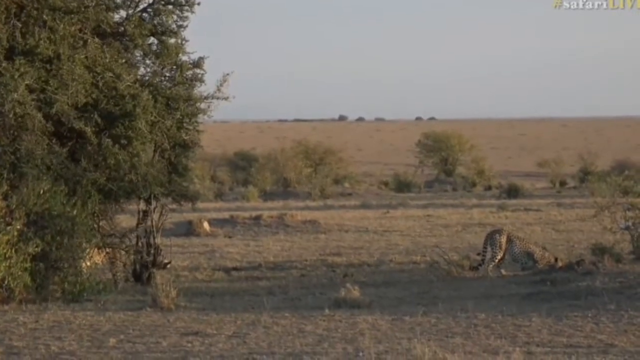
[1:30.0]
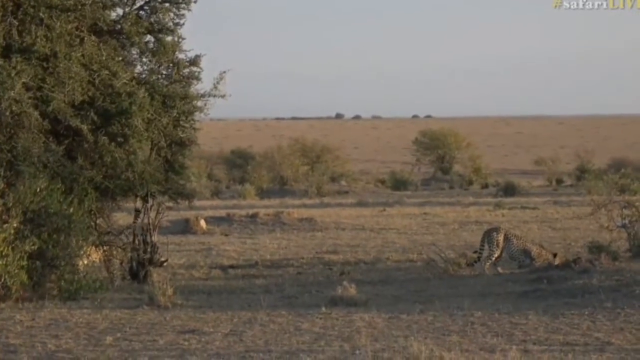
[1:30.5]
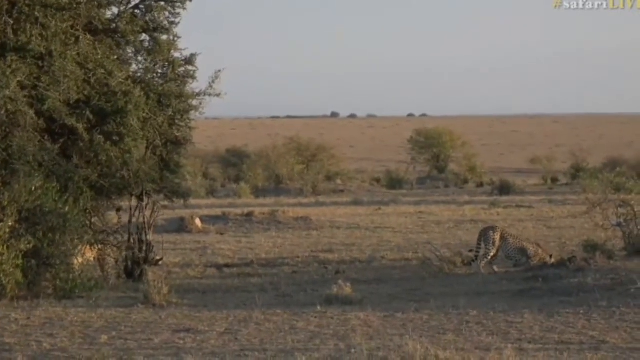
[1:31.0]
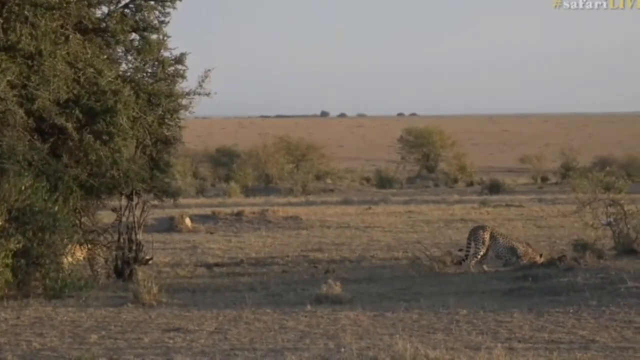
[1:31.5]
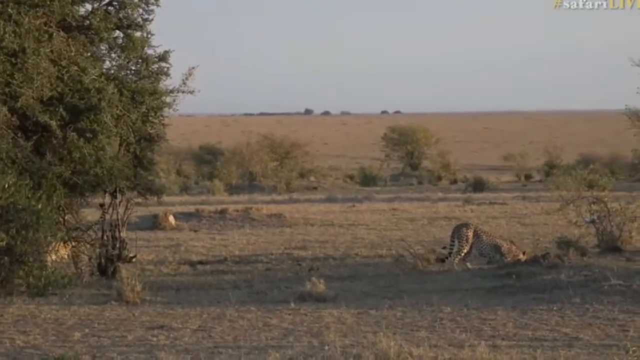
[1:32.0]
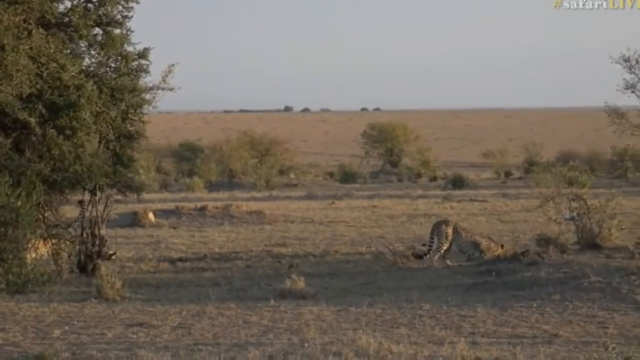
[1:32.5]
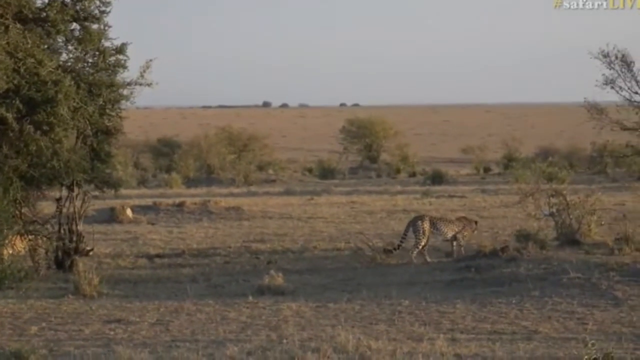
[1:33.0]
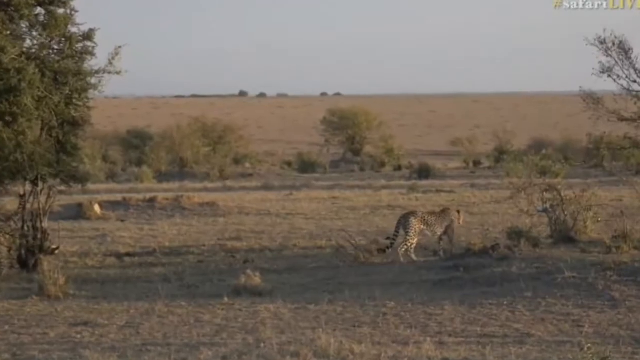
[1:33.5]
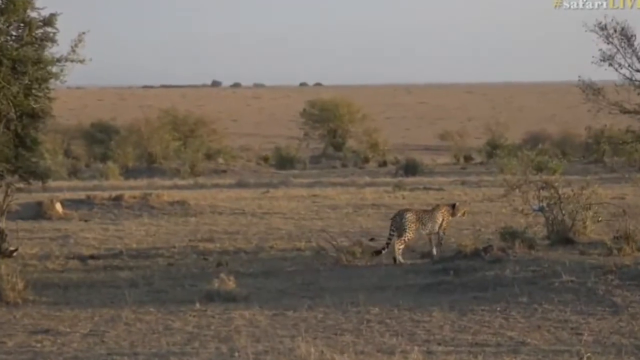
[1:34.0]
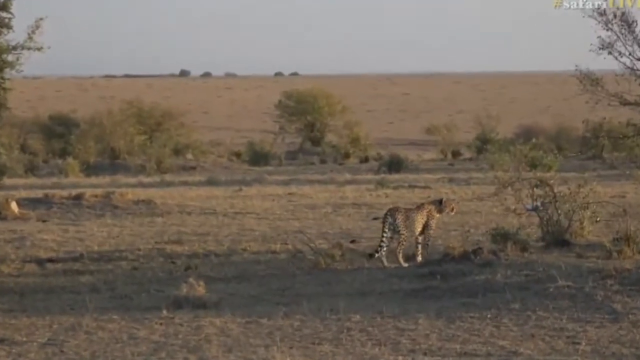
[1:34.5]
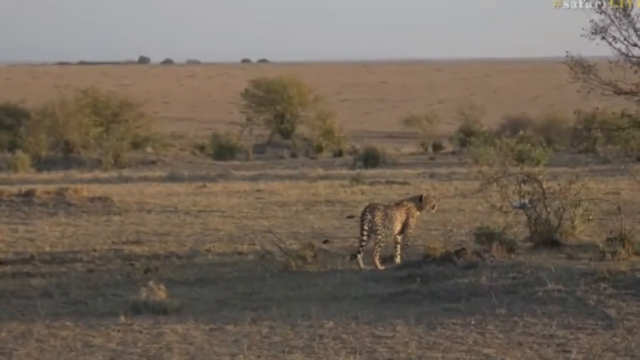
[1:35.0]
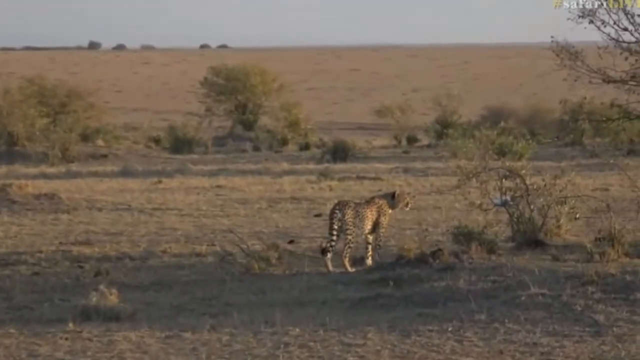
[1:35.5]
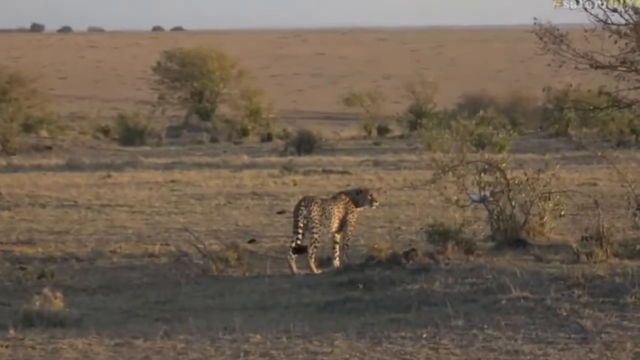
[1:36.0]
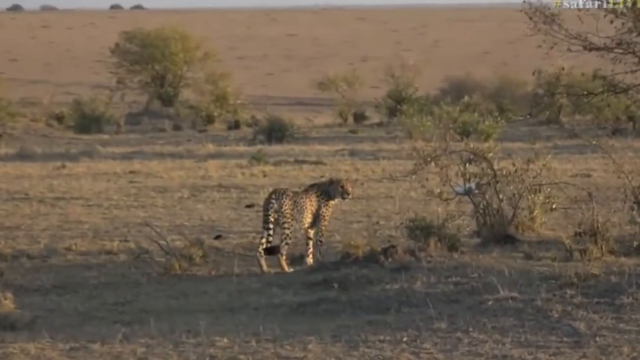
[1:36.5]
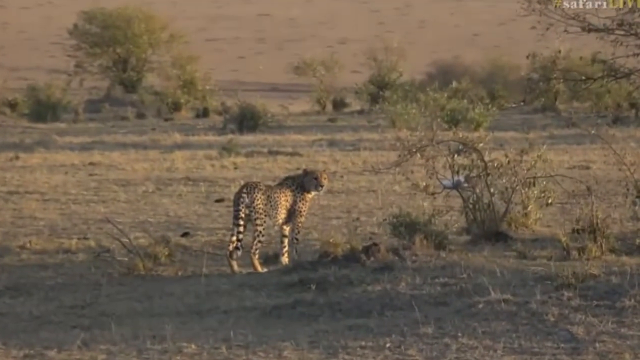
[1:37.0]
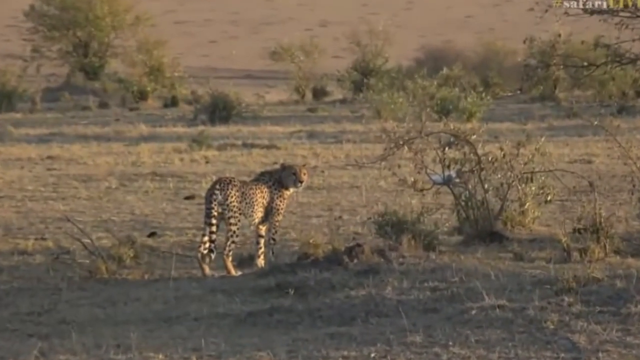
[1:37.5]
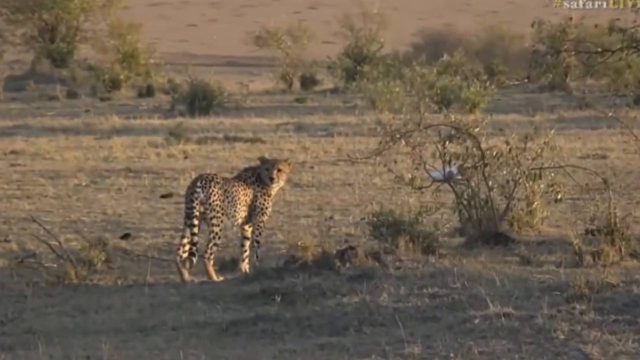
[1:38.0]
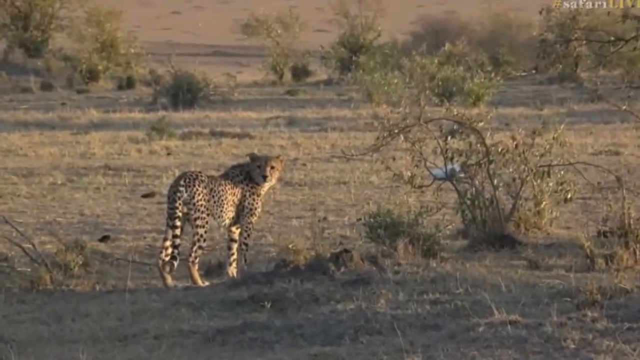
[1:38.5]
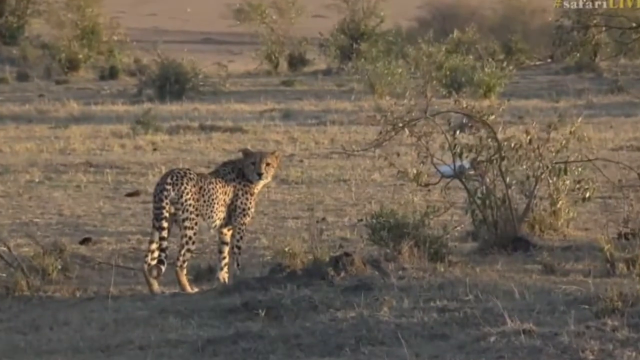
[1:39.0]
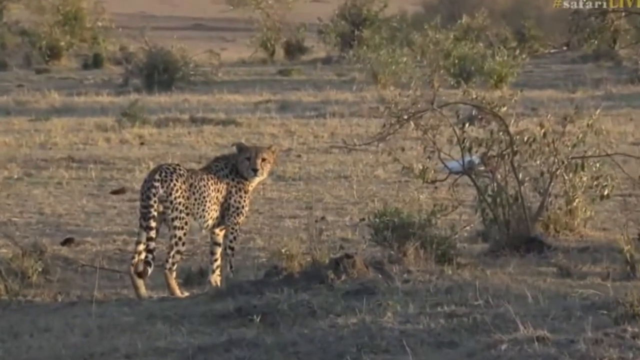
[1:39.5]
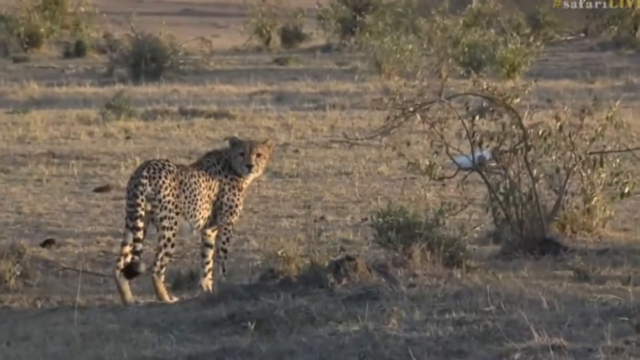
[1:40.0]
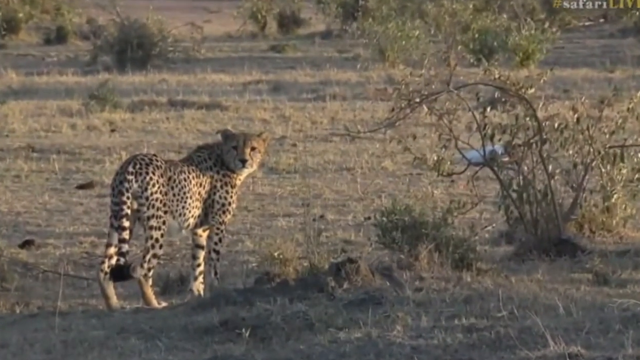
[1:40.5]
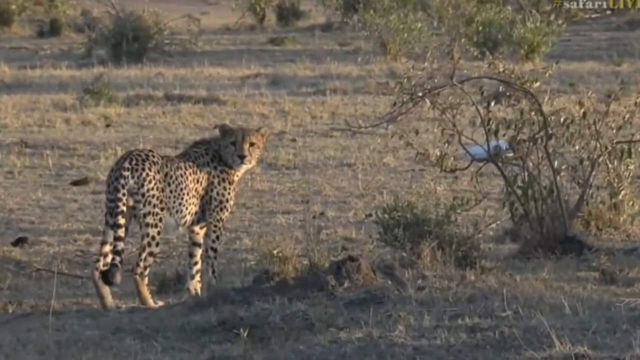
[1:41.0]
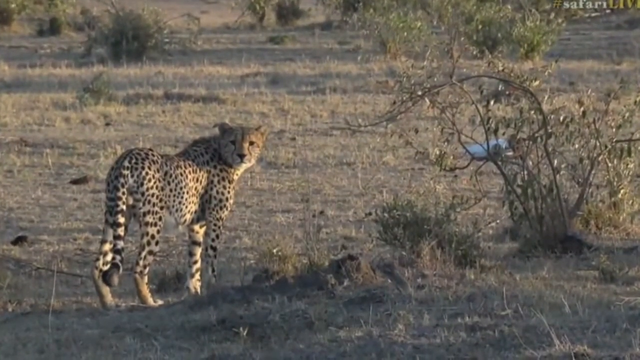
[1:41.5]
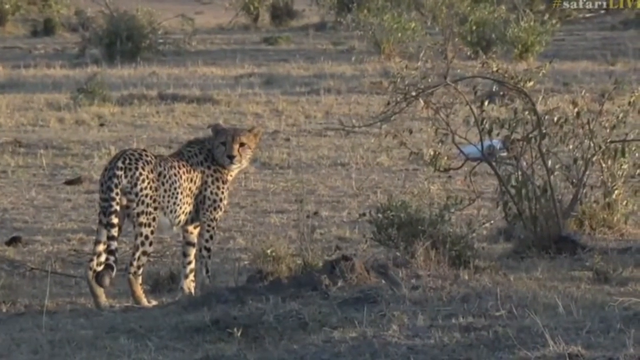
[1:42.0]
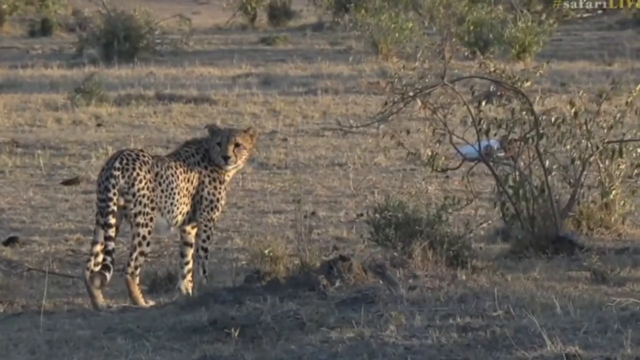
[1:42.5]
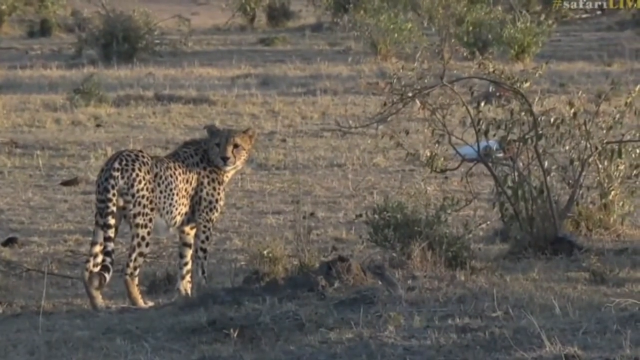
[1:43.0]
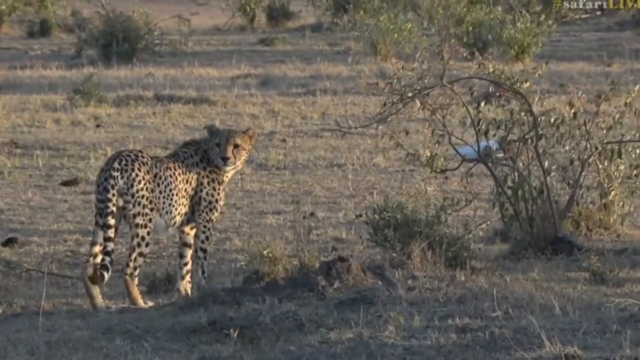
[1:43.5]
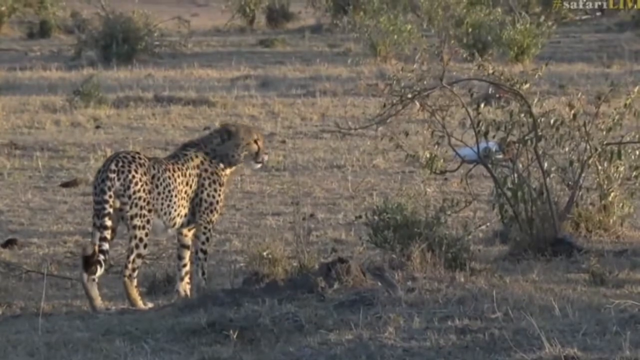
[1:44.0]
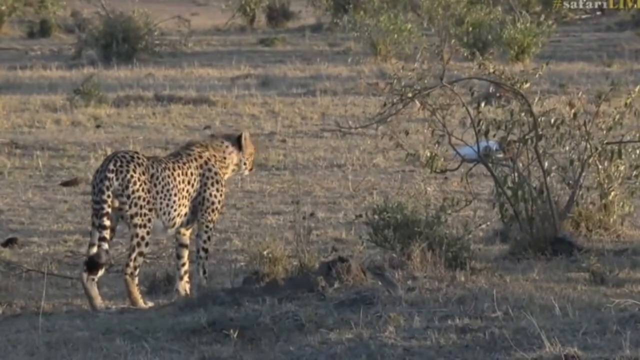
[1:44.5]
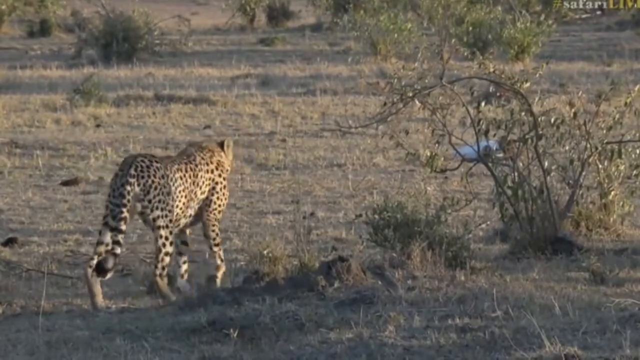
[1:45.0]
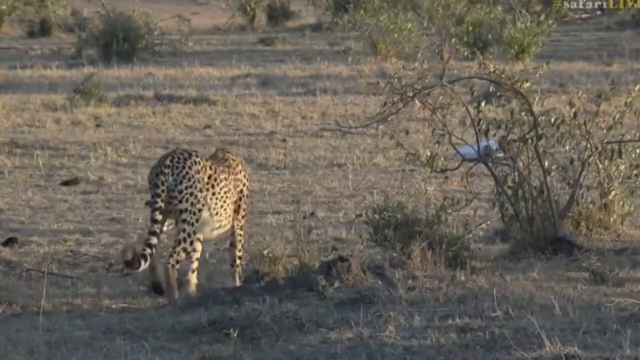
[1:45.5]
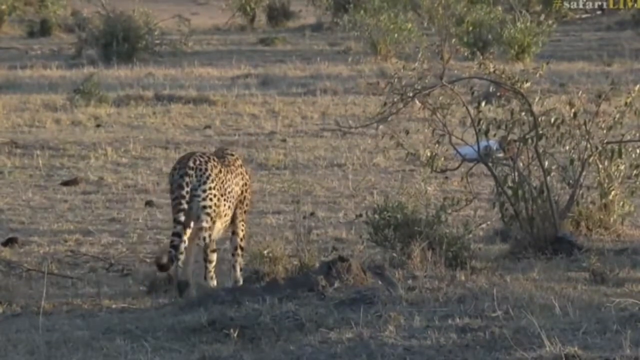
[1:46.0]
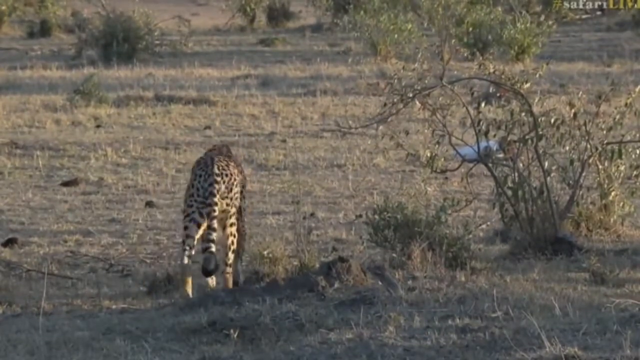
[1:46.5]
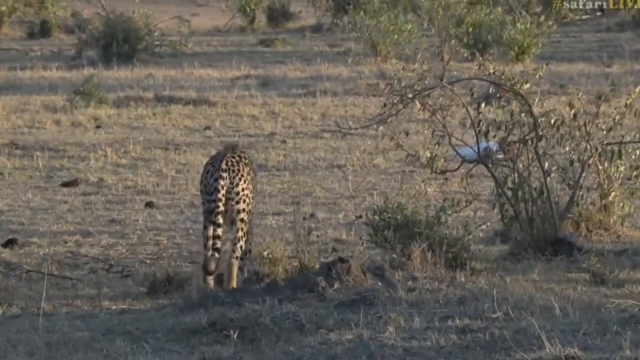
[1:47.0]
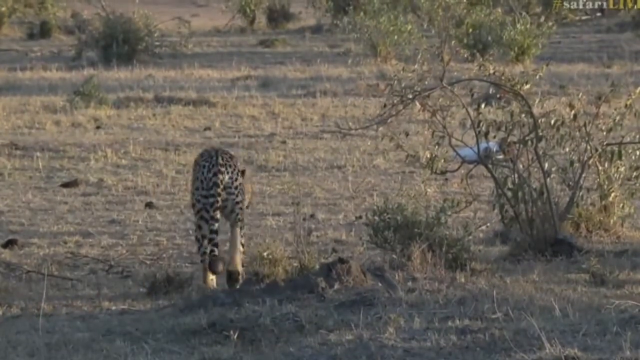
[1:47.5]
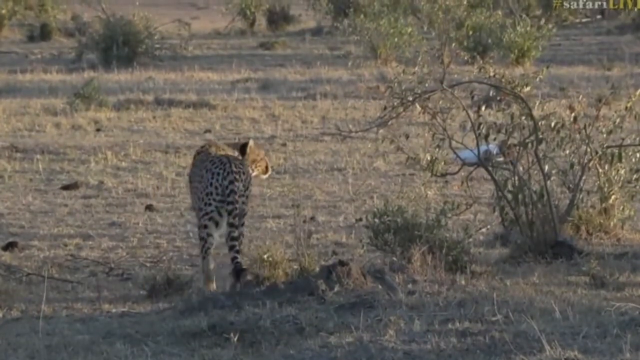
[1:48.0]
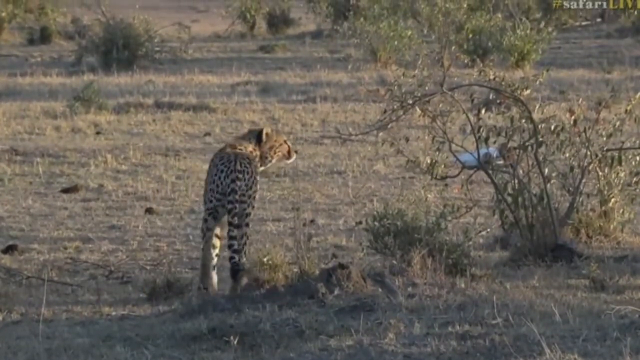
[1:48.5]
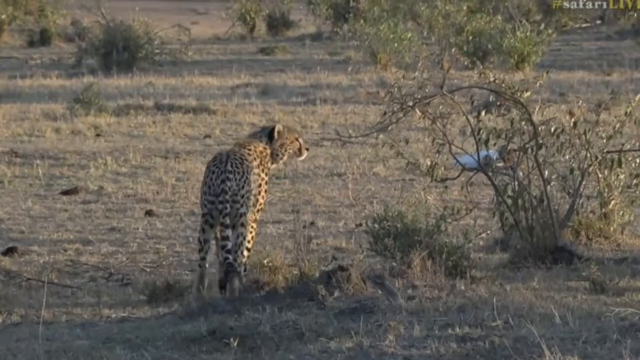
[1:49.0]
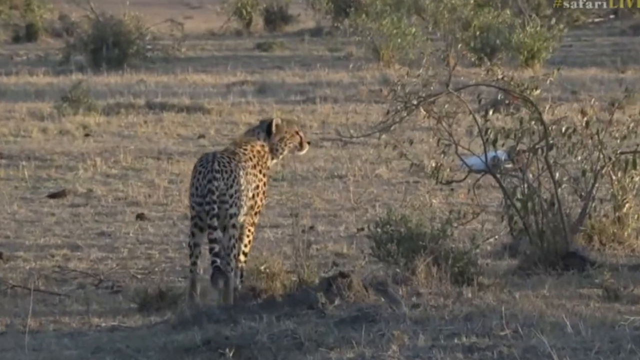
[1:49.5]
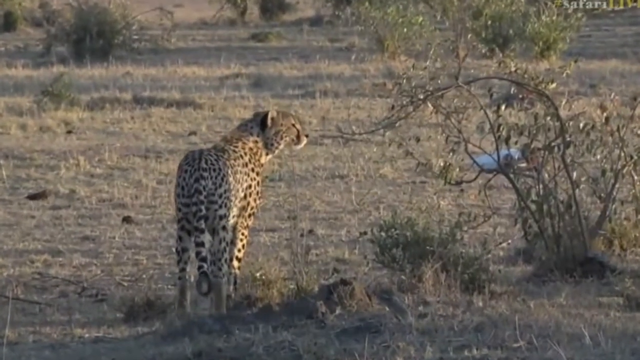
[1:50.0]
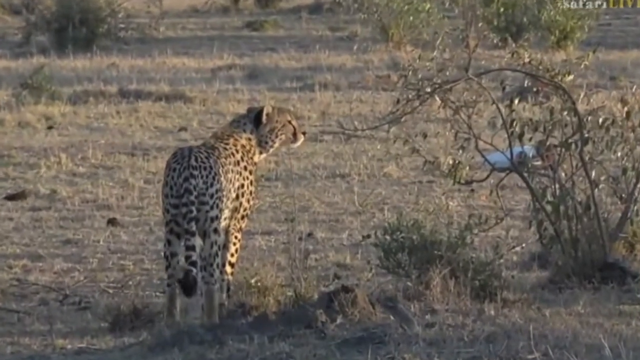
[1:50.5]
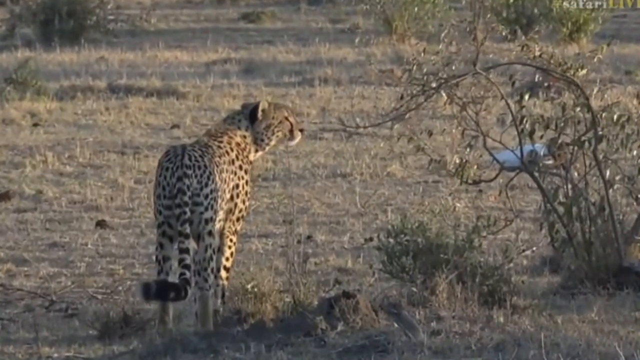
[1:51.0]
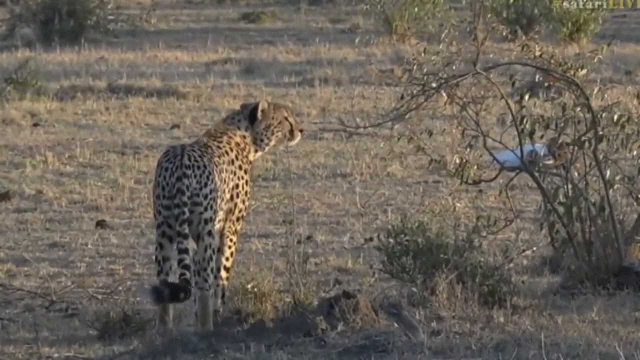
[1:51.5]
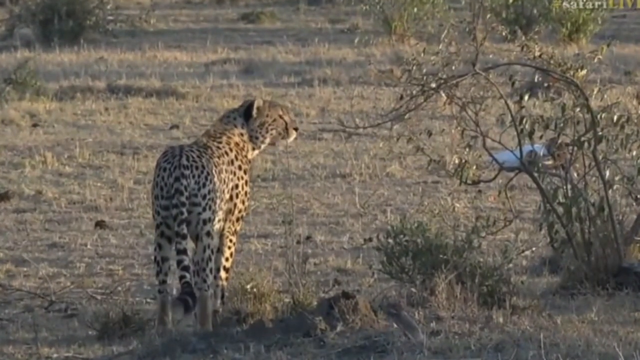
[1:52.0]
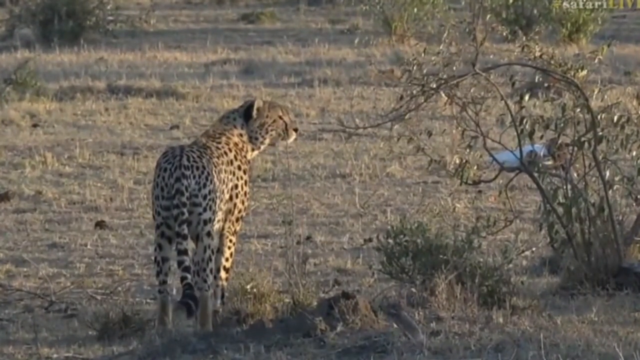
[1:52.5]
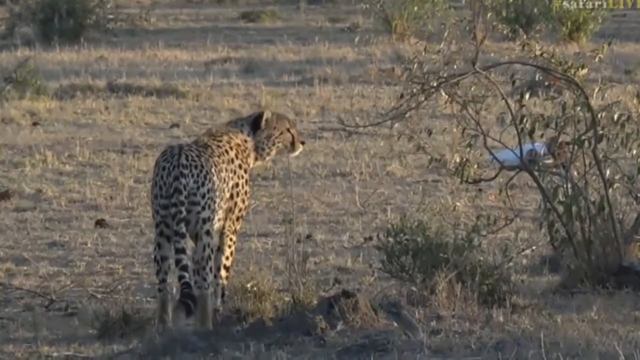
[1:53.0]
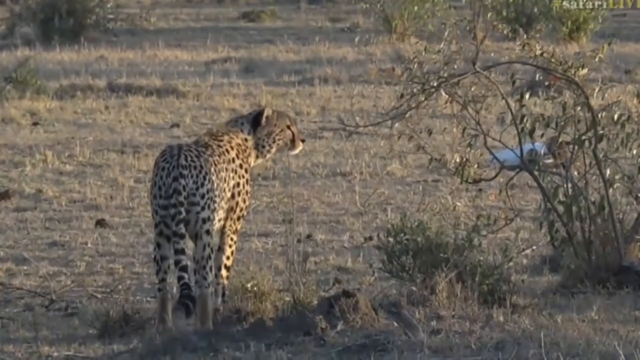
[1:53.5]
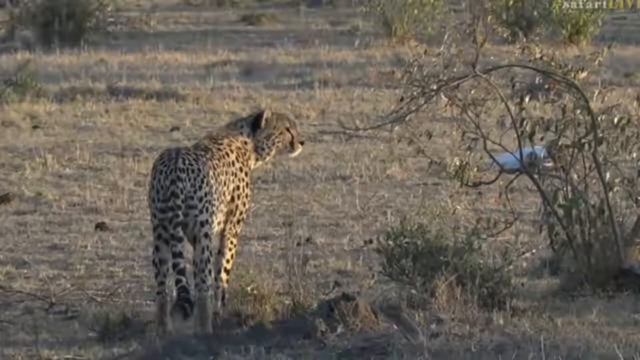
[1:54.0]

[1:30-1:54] The camera focuses on a cheetah that keeps changing spots and seems focused and busy on the ground, trying to fish something out of it. The camera zooms out from the cheetah. The cheetah looks behind toward the people, looks directly into the camera, then looks in the other direction. It bends down on its two front feet, struggling to move something from a hole or from the ground. Later it stands up, looks around, looks in the direction of the camera, looks away, and starts walking away, turning around.